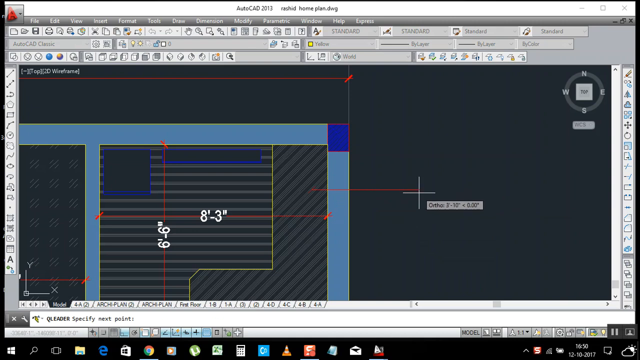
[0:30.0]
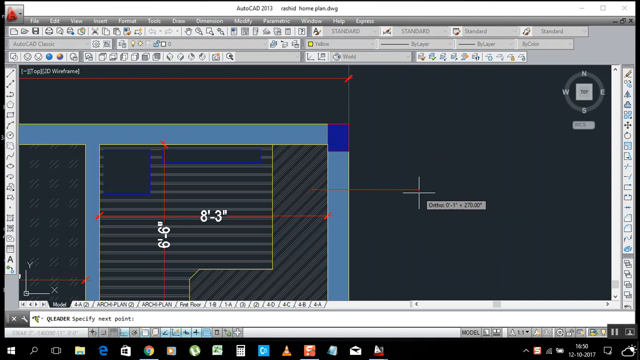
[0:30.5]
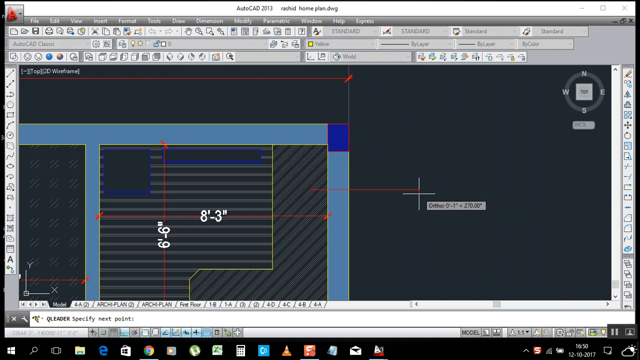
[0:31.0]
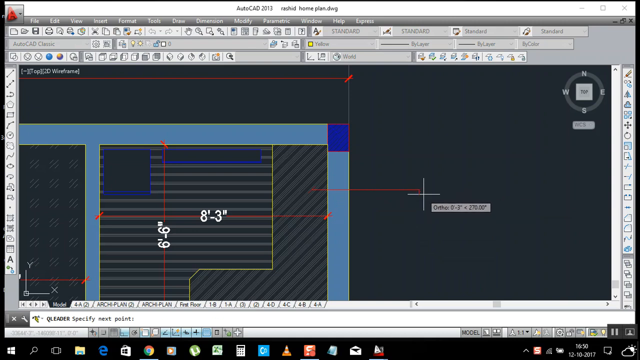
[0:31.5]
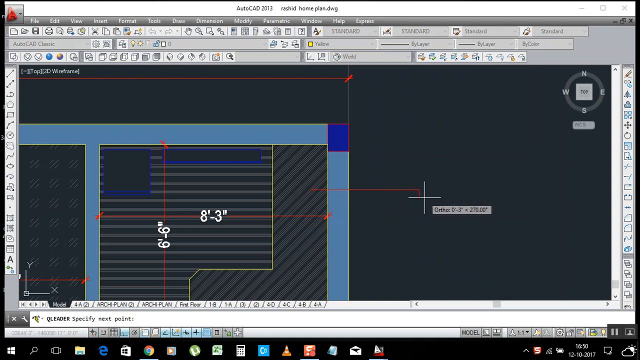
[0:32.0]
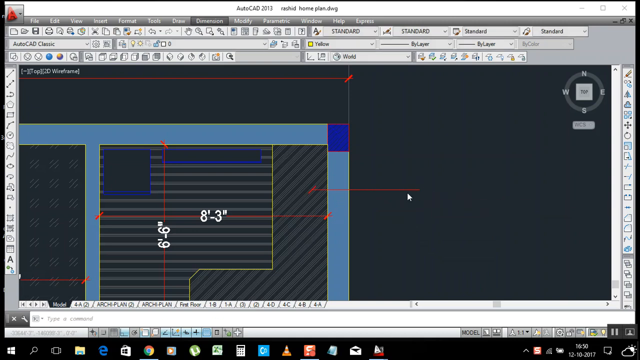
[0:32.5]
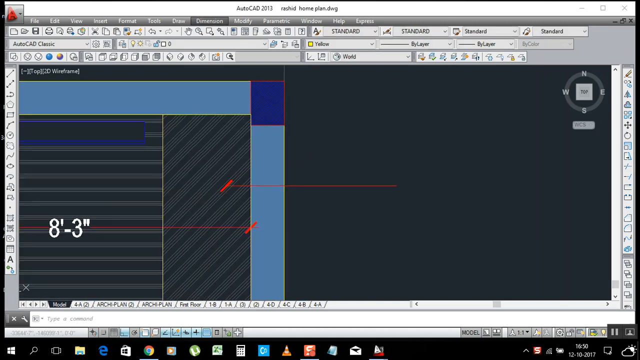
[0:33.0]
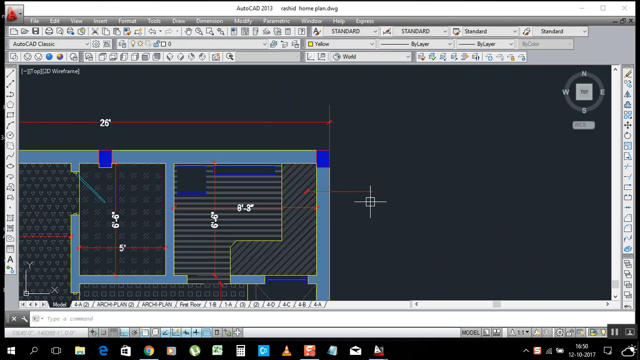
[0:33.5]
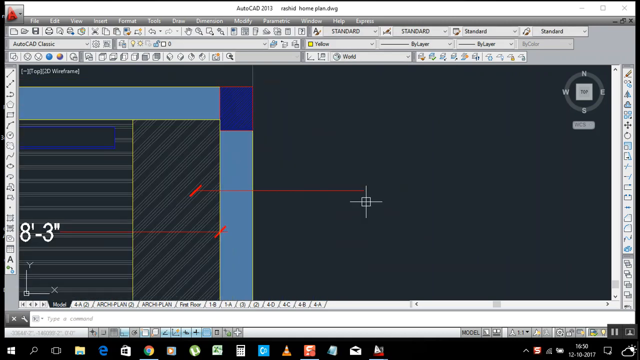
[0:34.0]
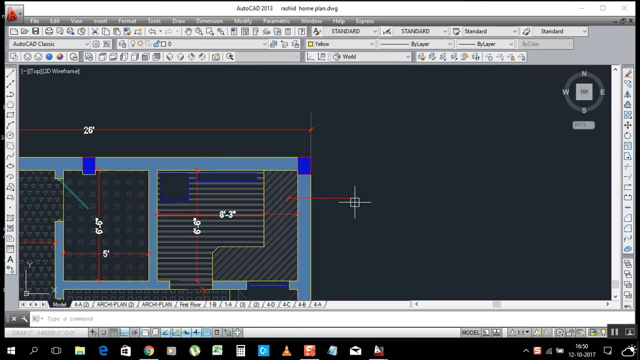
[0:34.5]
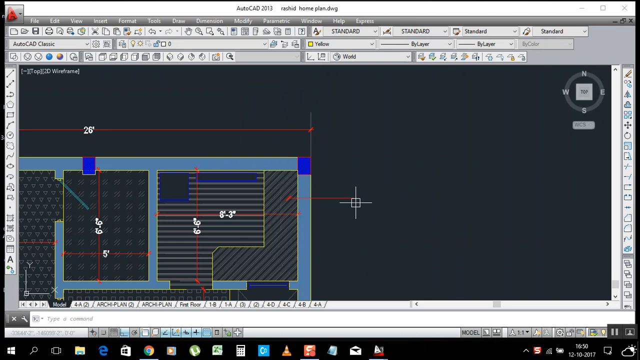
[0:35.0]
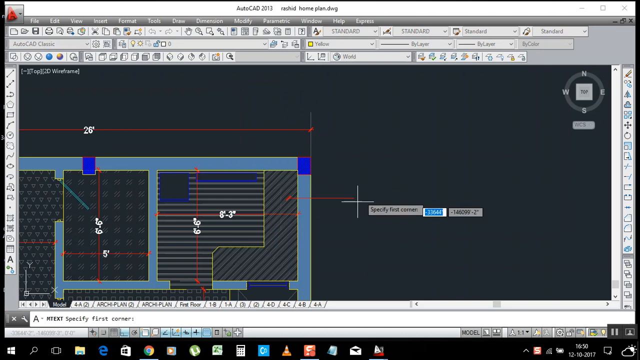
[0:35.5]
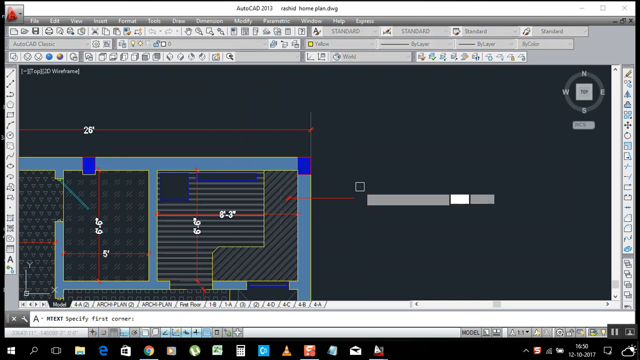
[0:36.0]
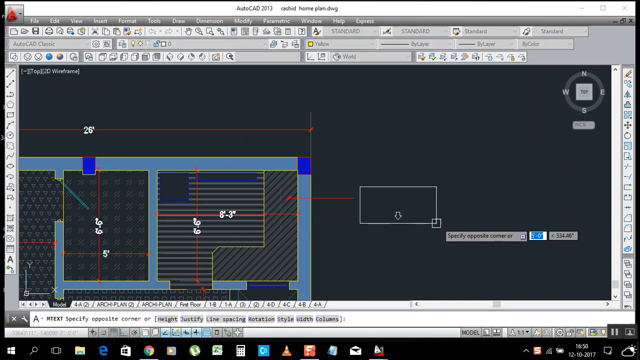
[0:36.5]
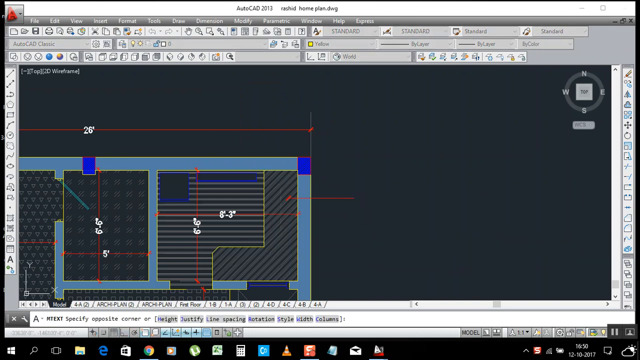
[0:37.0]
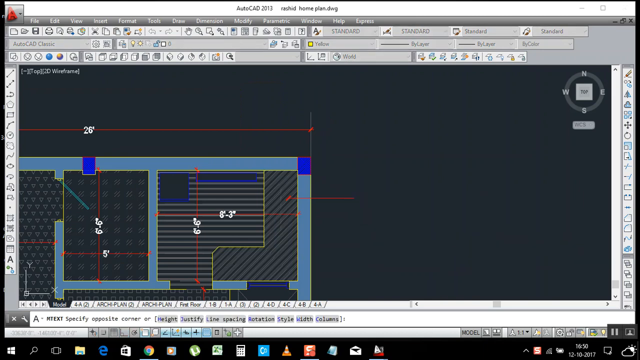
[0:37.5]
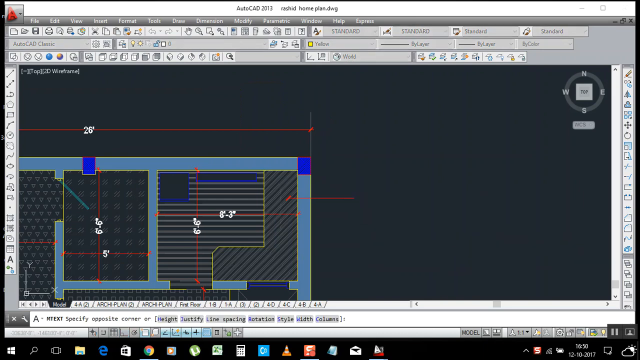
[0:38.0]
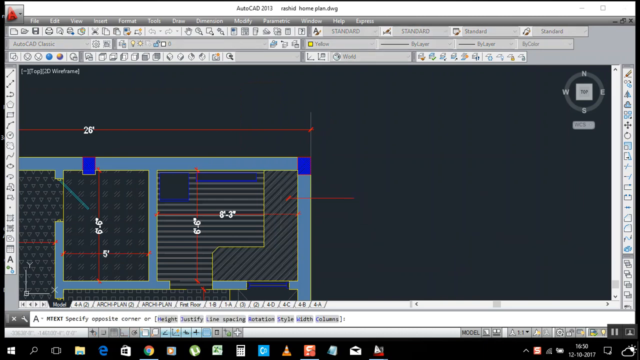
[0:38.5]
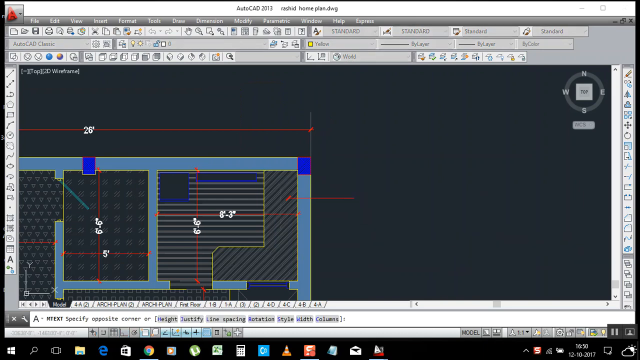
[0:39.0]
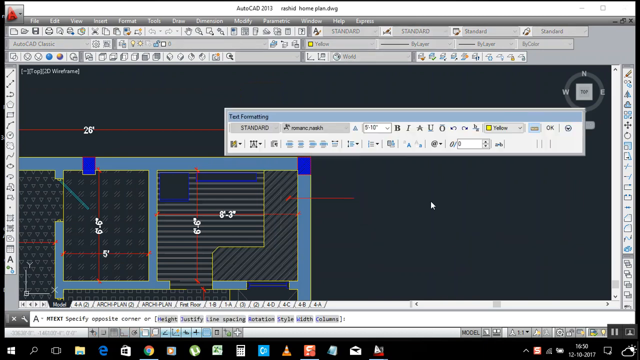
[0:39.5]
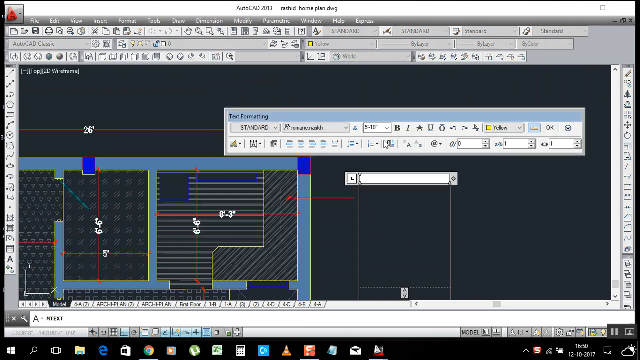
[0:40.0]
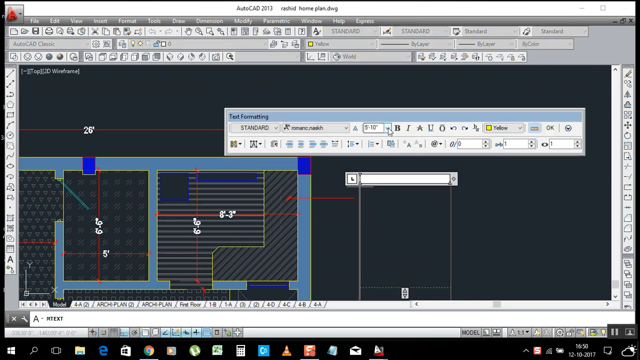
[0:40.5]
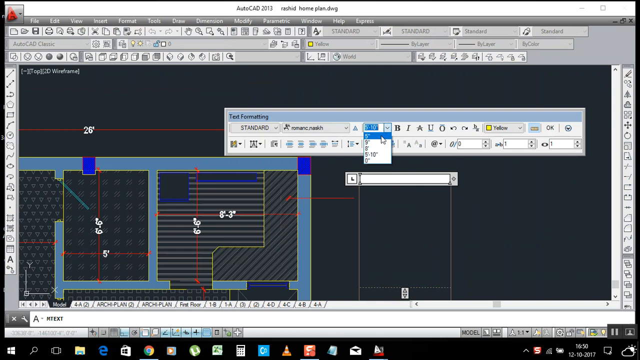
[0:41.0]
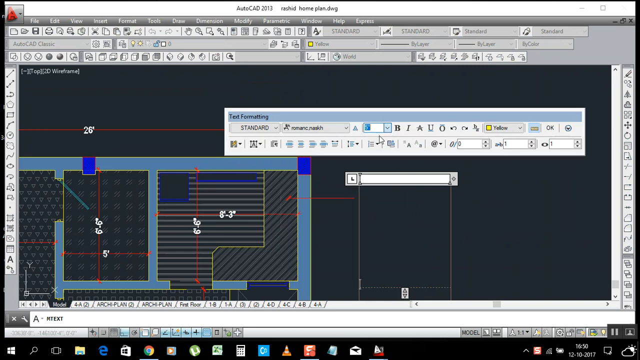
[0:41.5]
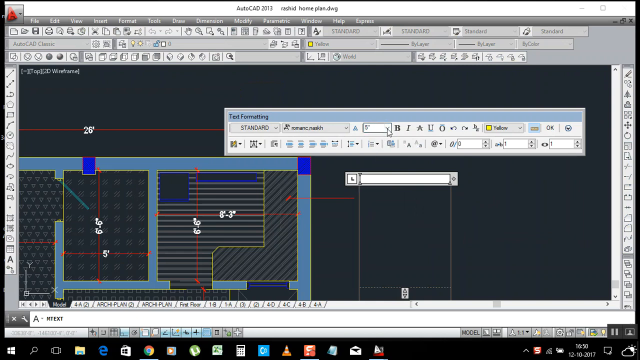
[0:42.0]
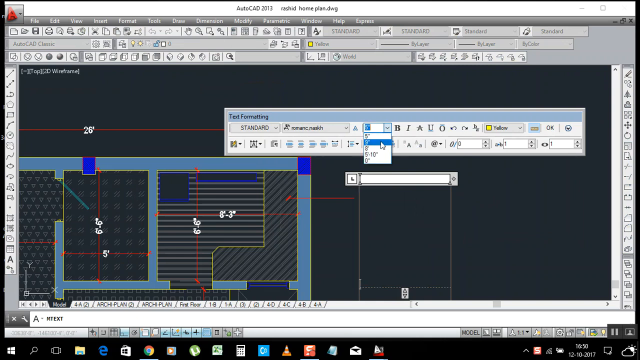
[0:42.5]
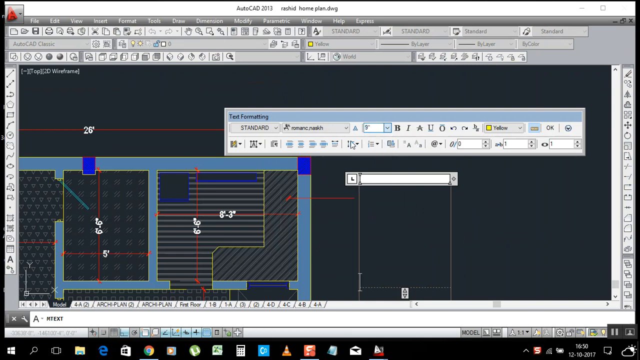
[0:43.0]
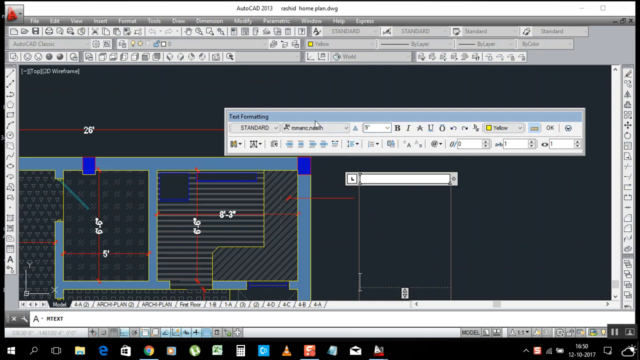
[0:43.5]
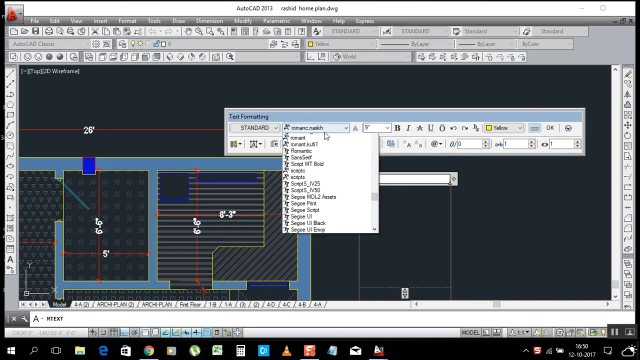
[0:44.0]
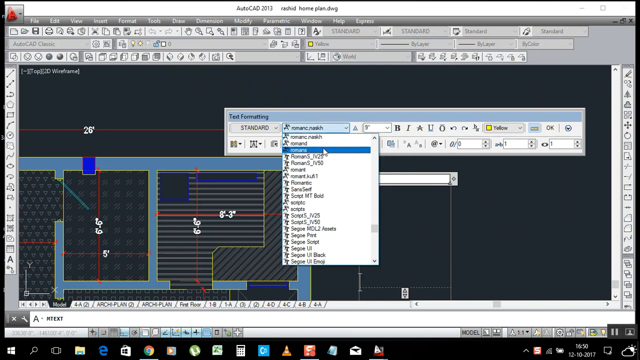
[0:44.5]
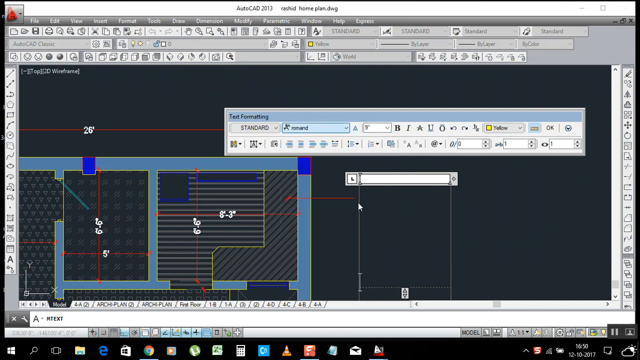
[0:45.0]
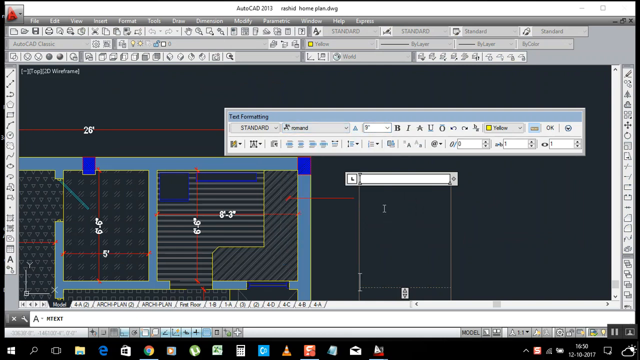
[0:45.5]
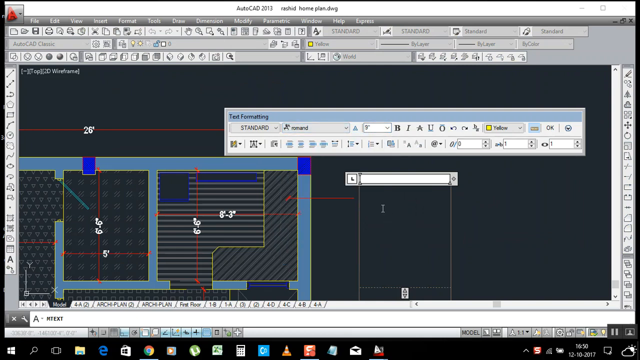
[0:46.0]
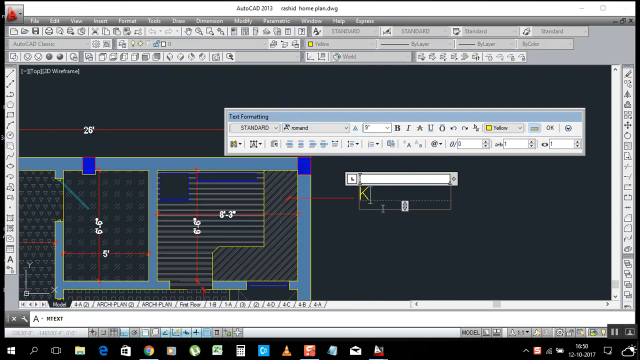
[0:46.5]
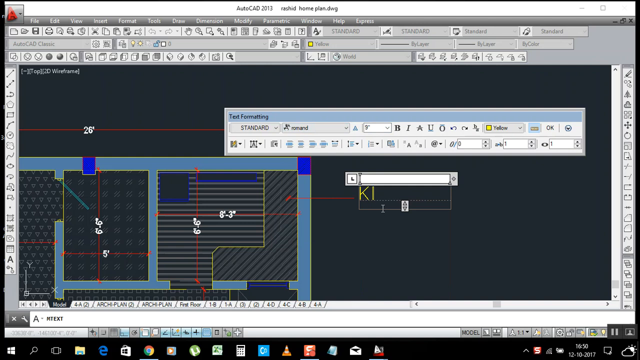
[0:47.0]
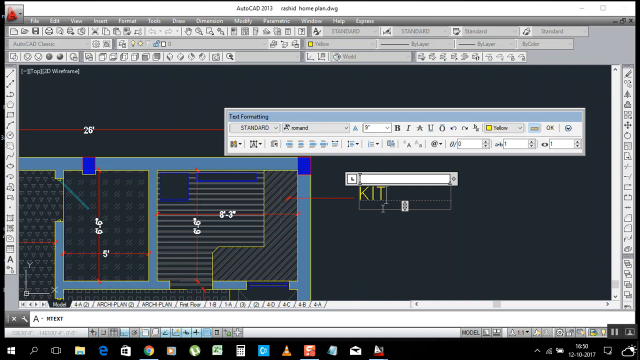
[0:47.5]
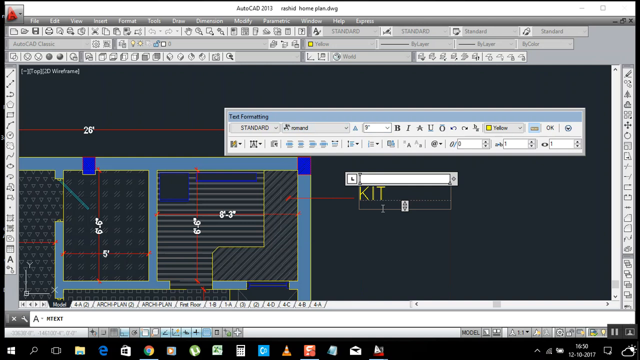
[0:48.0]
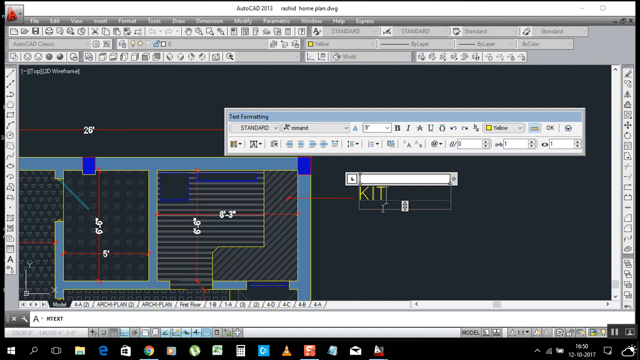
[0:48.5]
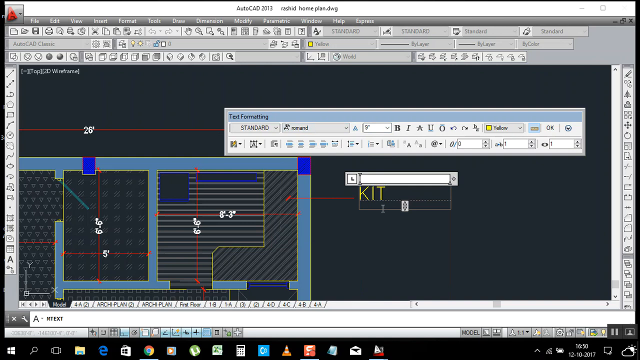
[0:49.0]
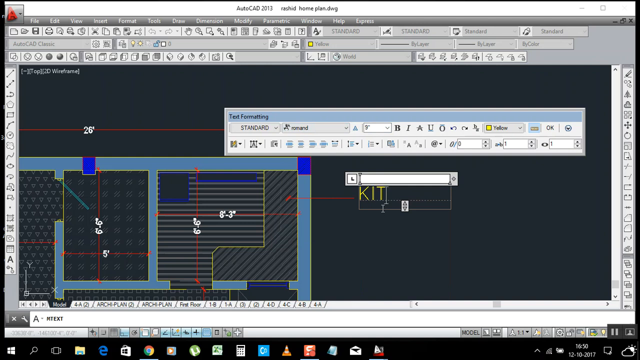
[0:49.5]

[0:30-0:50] After the red horizontal line is drawn, another line, a vertical one, is drawn coming off of it, but then that line is gone. The left end of the red horizontal line terminates in a red forward slash. In the upper right corner of the window is a compass, with north up, south down, west to the left and east to the right, and a grayish square in the middle that says "top". A dialog that says "text formatting" appears, with the text set to "standard". An option seems to be chosen from a drop-down menu, and then a font is chosen. Other options to bold, italicize, strikethrough or underline the text are visible. Yellow text in all capital letters is then typed on the drawing.